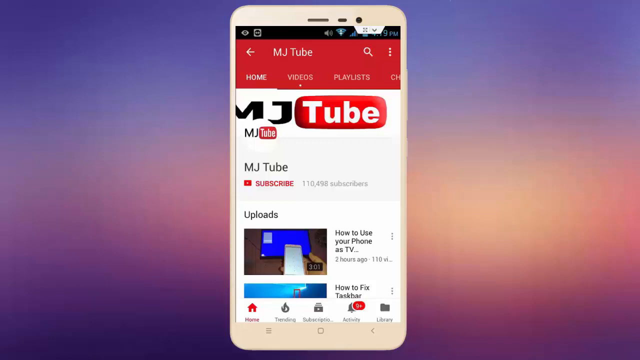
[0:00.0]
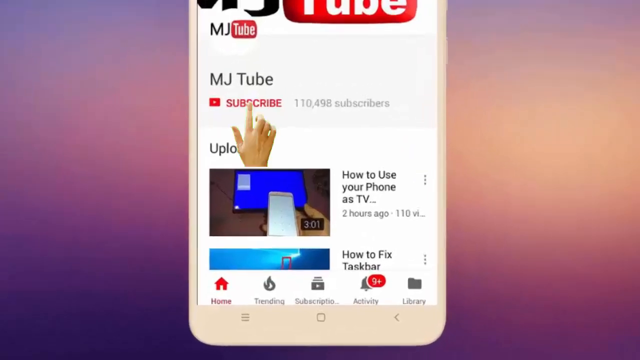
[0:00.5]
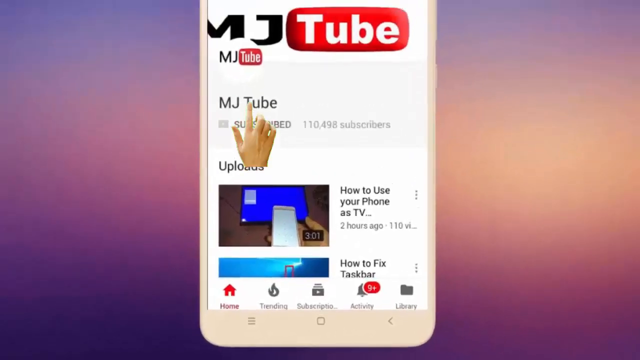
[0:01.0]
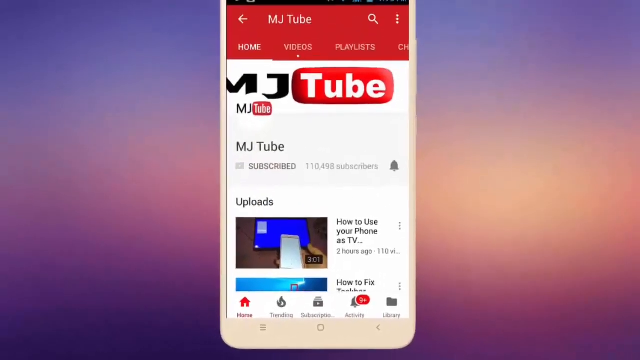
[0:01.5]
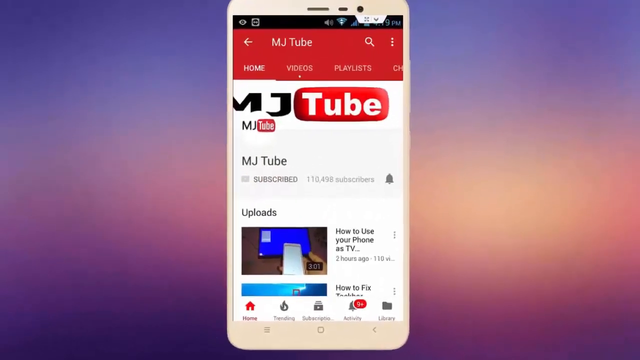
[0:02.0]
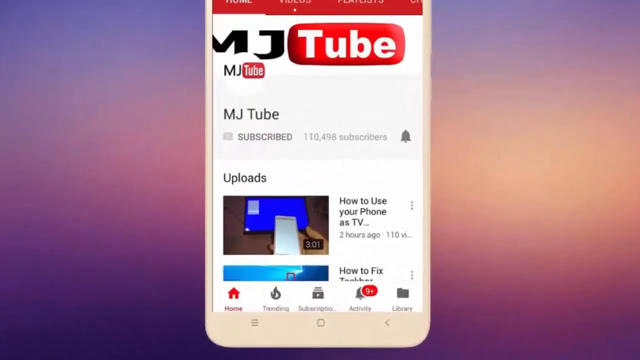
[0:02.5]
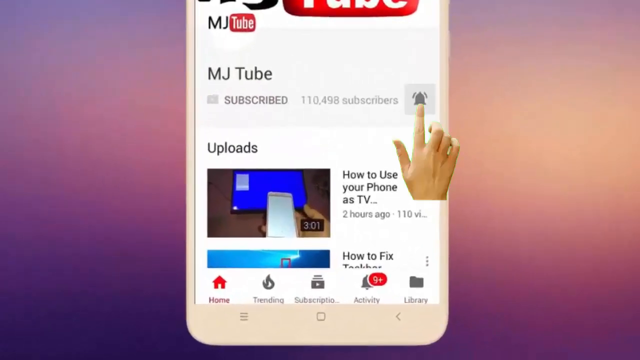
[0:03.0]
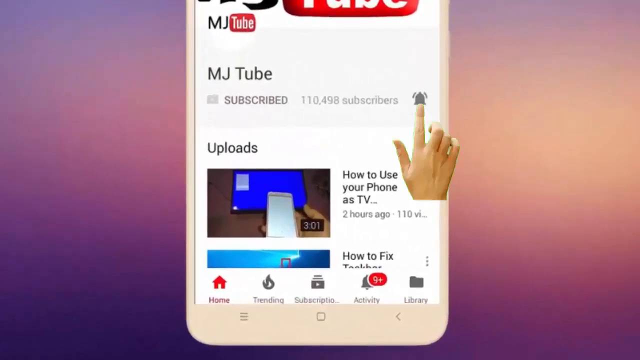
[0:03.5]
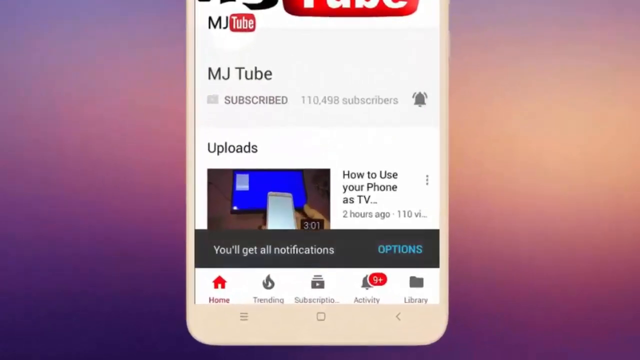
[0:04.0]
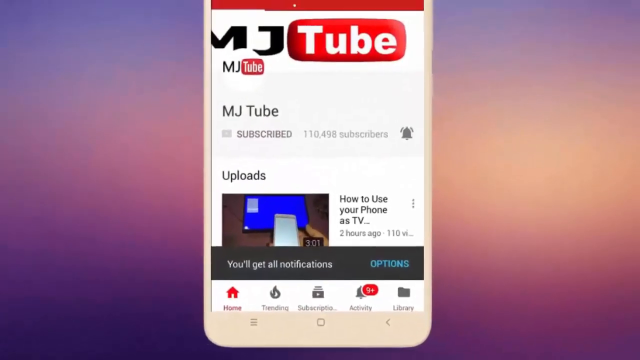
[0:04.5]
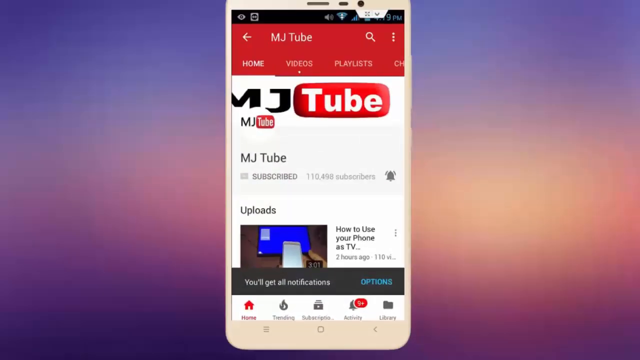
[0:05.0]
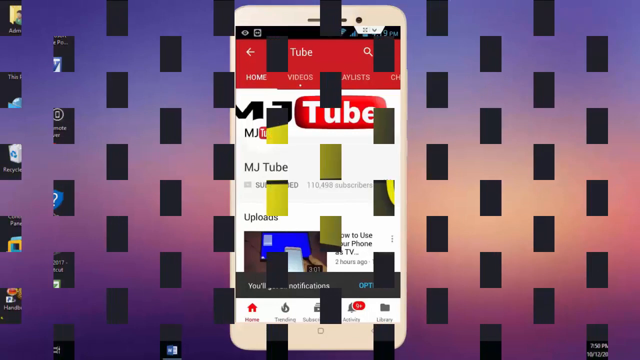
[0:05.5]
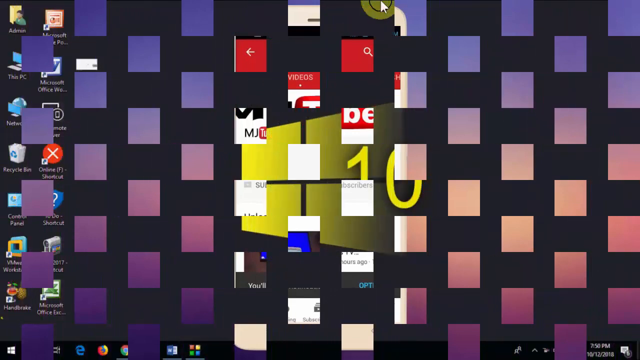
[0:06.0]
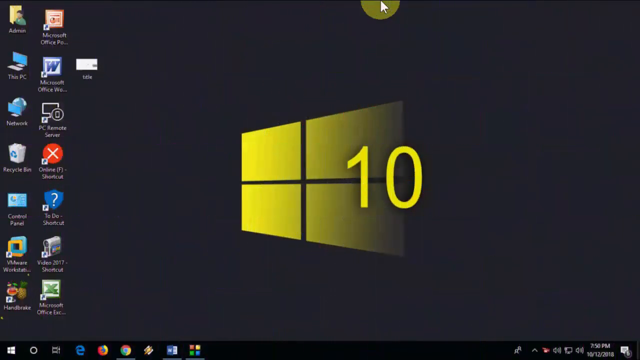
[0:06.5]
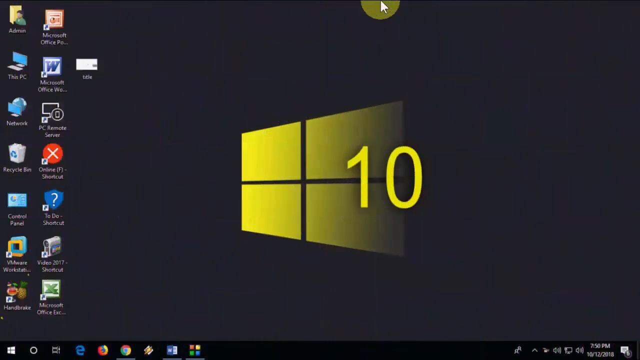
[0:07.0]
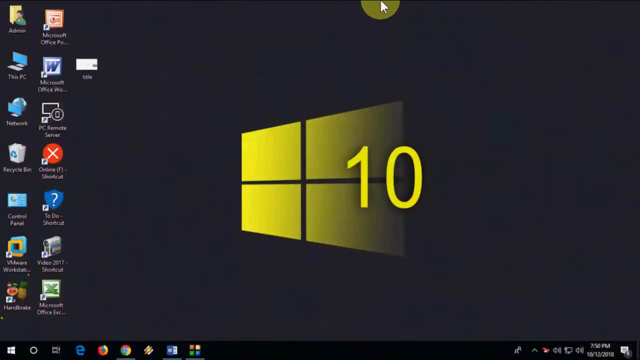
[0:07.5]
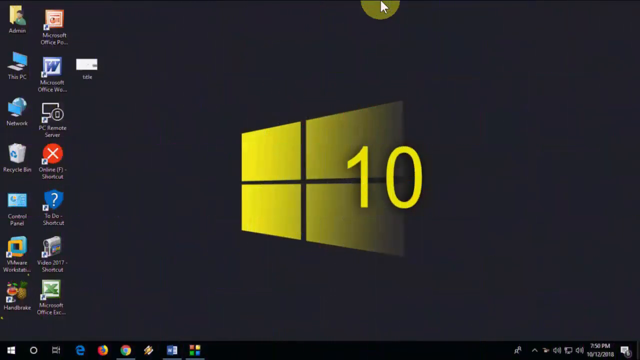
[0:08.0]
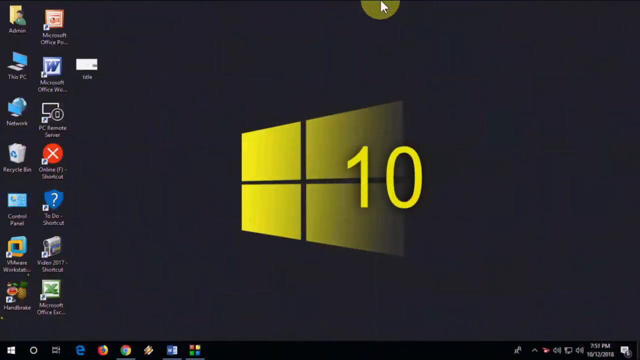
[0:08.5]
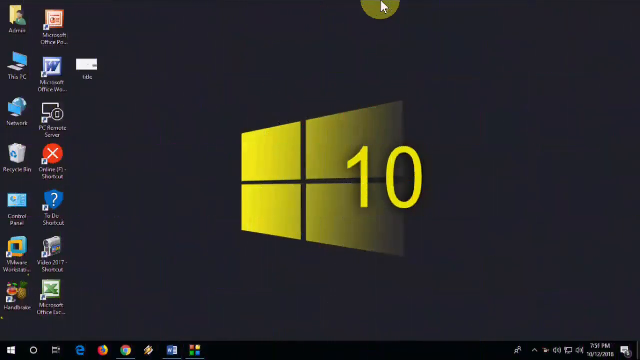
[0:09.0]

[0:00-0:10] The video opens on what is kind of a mobile phone shown against a gradient background of orange, purplish and pink. The YouTube mobile app is open to the channel MJ2, and a hand icon appears and clicks the subscribe button, then notifications are turned on, somewhat like an intro. It then transitions to a Windows 10 desktop background with a cursor and some applications visible on the desktop.